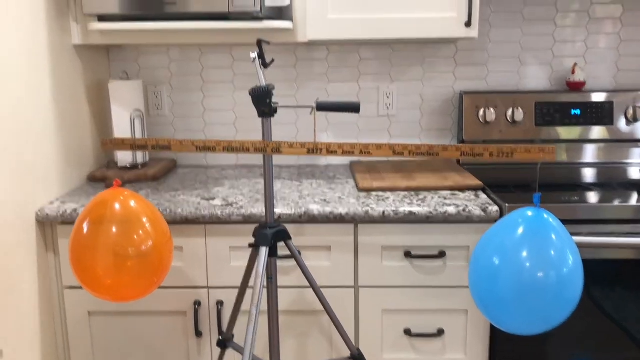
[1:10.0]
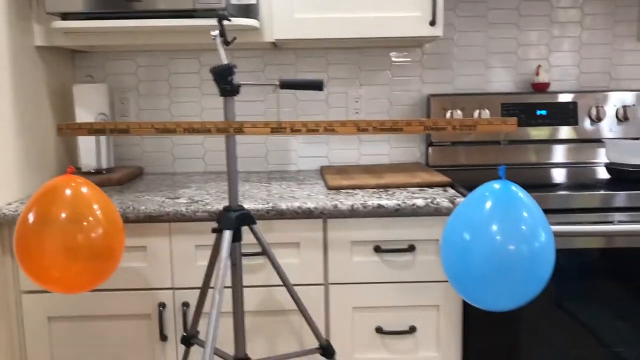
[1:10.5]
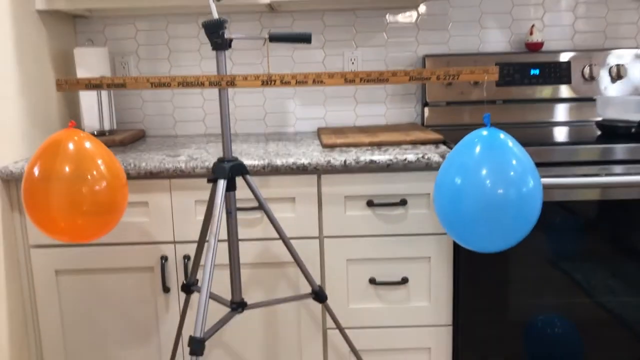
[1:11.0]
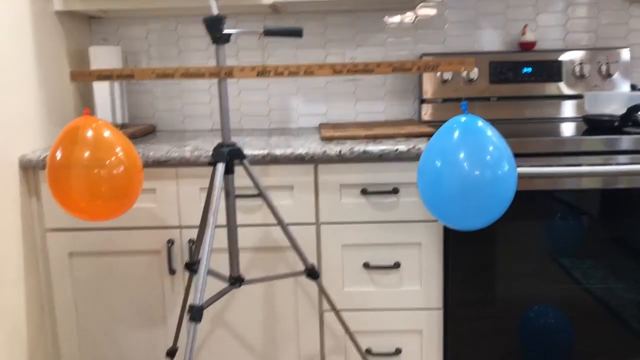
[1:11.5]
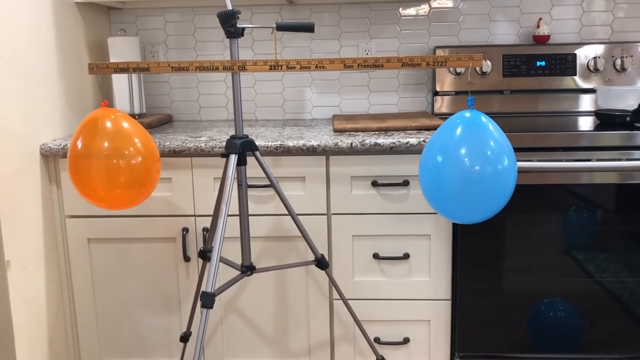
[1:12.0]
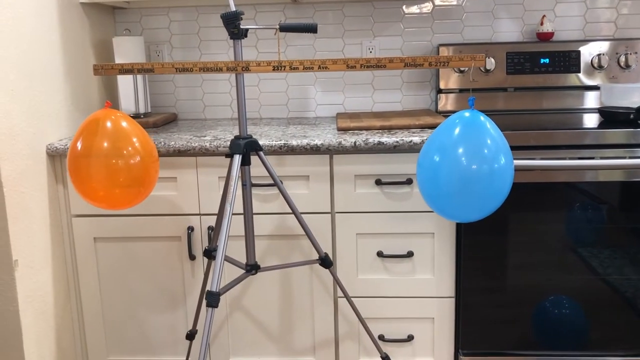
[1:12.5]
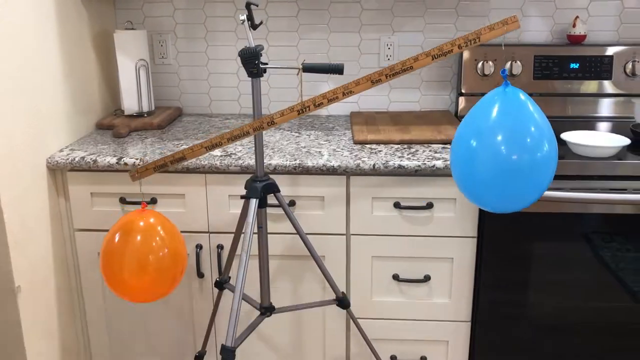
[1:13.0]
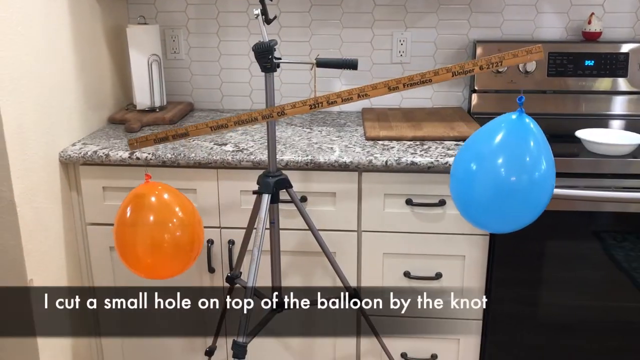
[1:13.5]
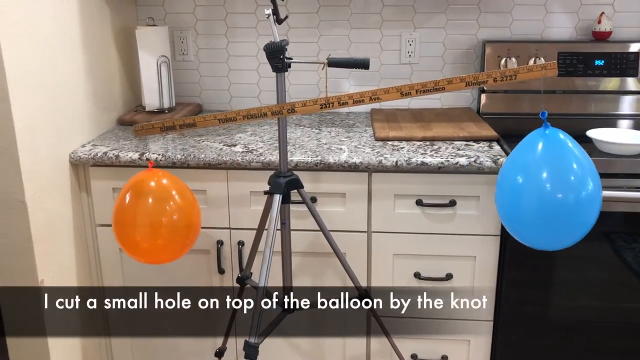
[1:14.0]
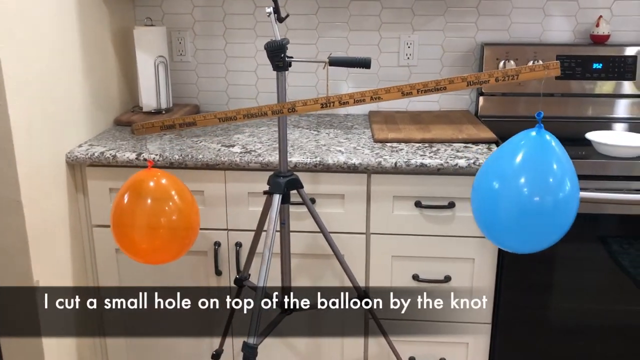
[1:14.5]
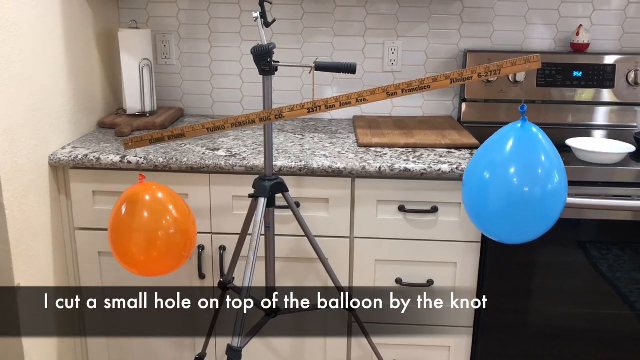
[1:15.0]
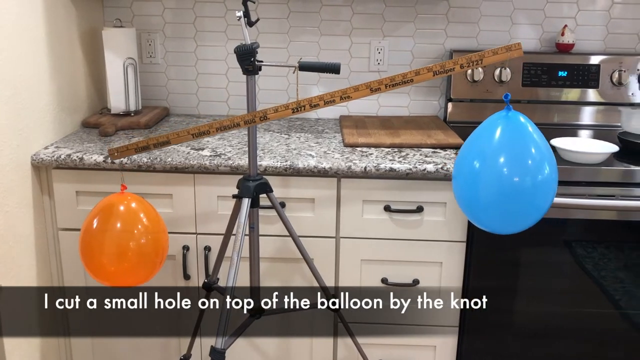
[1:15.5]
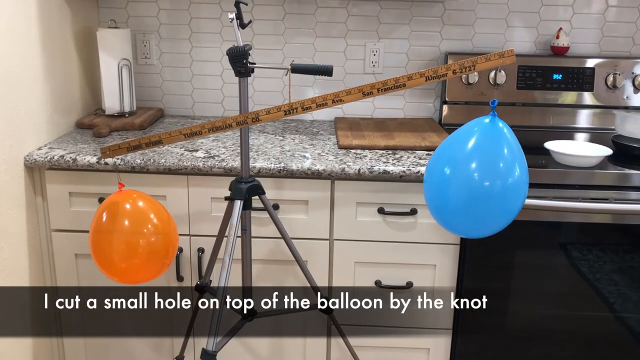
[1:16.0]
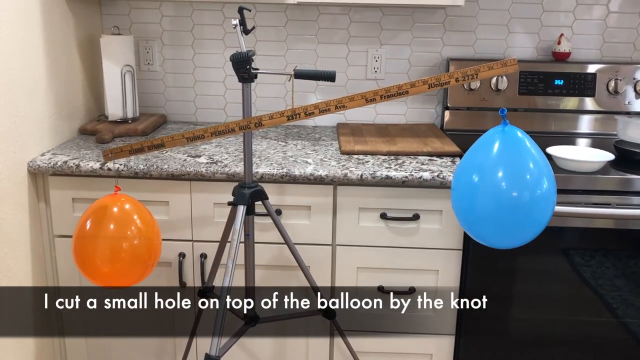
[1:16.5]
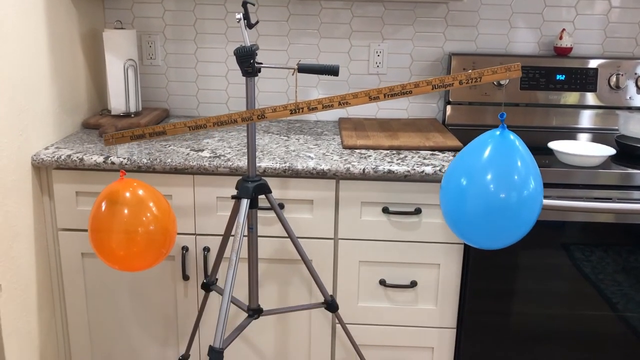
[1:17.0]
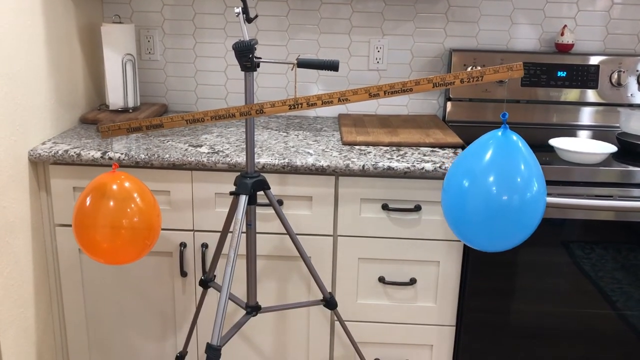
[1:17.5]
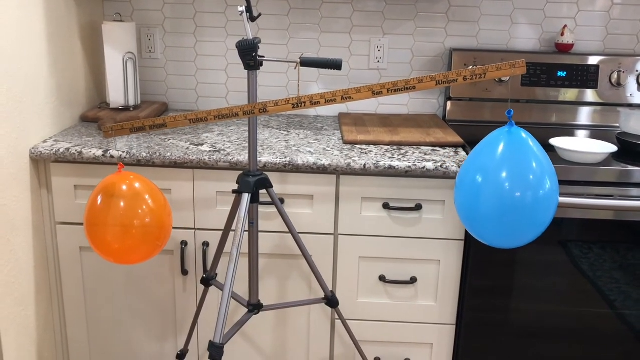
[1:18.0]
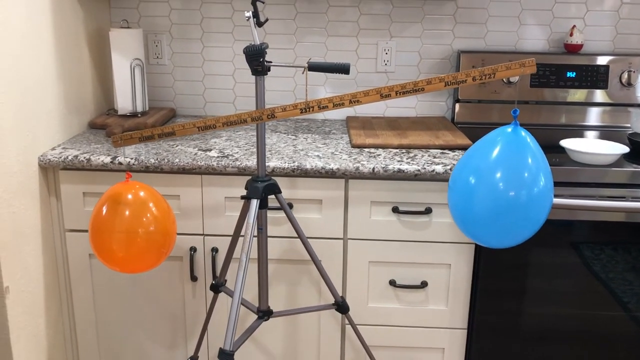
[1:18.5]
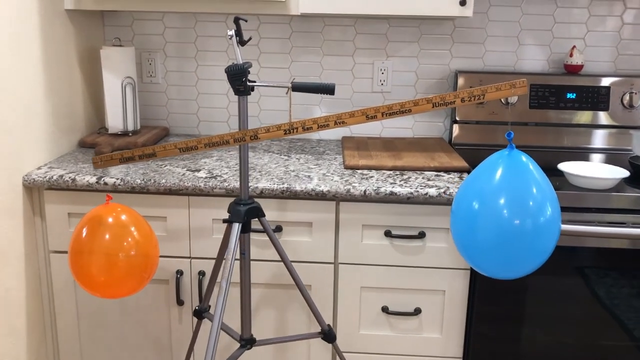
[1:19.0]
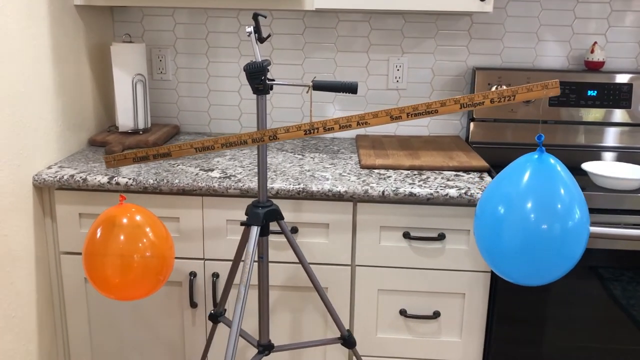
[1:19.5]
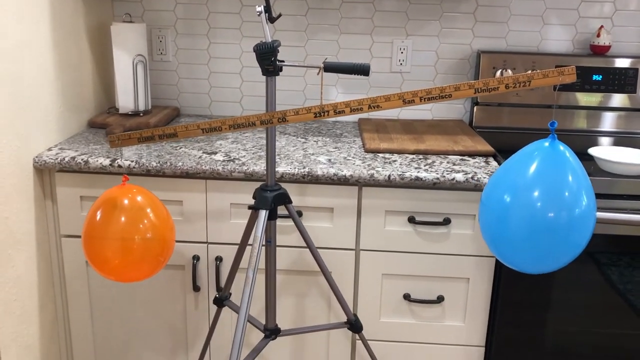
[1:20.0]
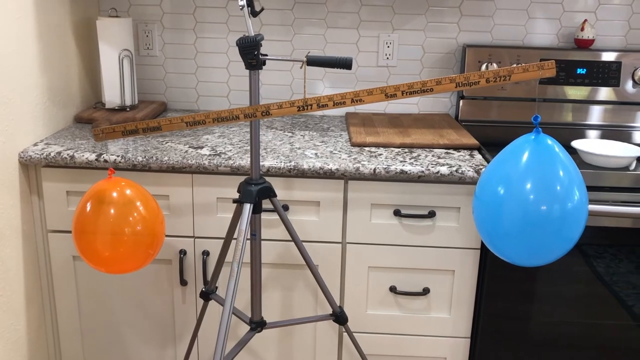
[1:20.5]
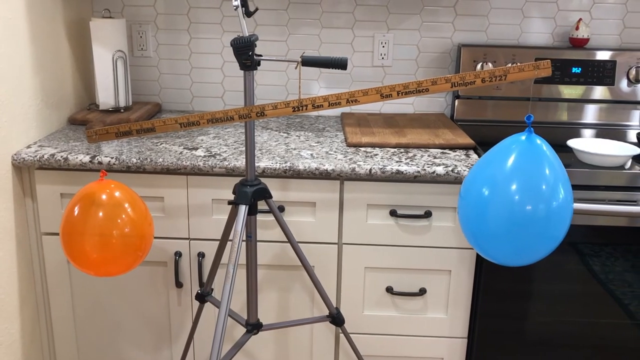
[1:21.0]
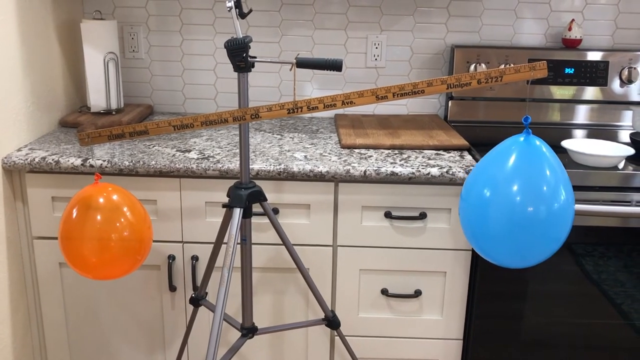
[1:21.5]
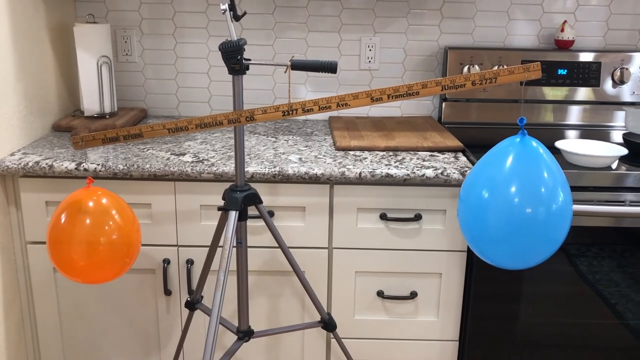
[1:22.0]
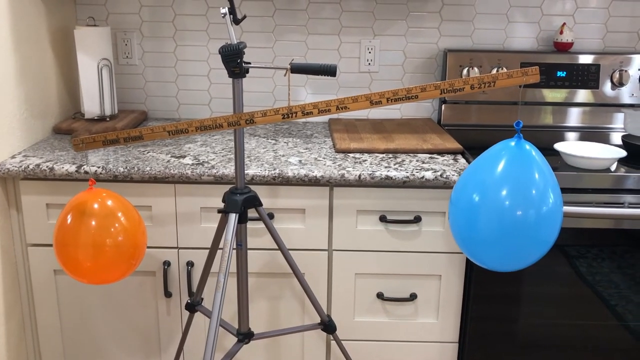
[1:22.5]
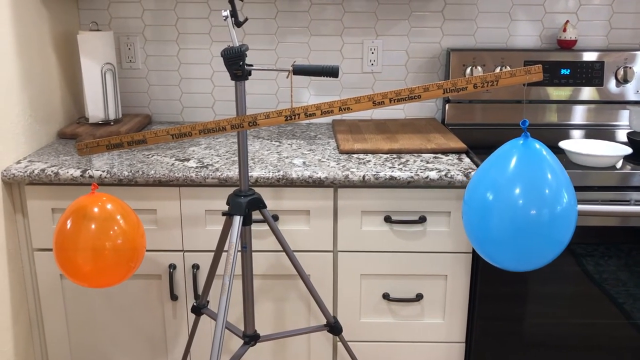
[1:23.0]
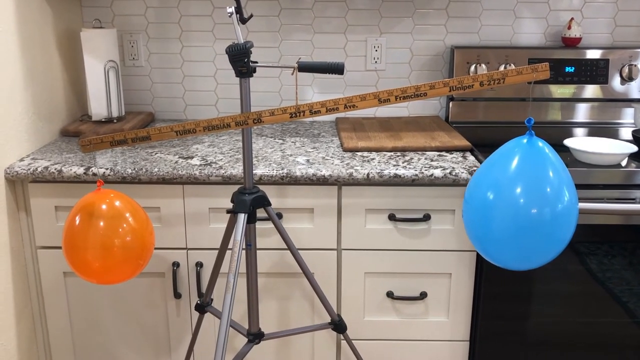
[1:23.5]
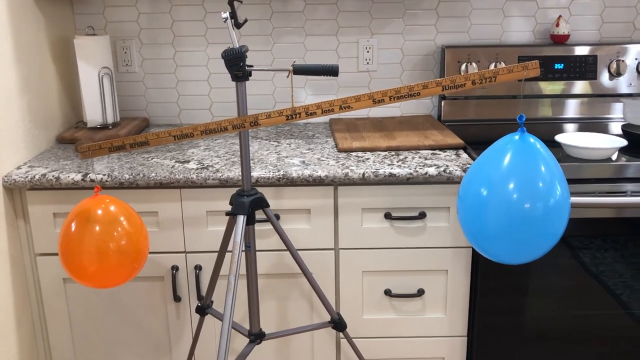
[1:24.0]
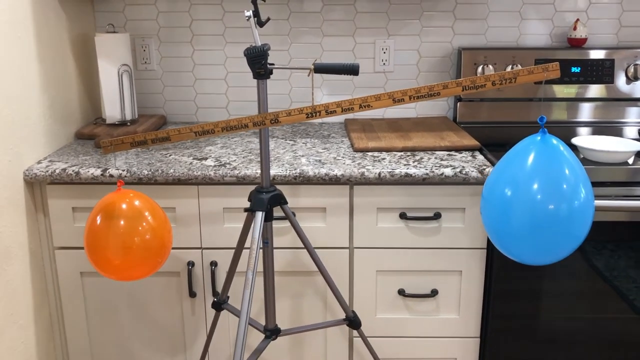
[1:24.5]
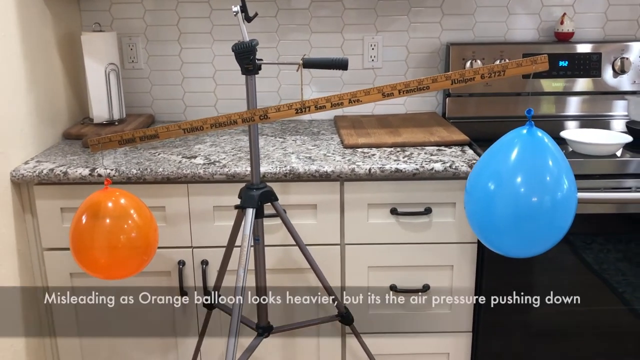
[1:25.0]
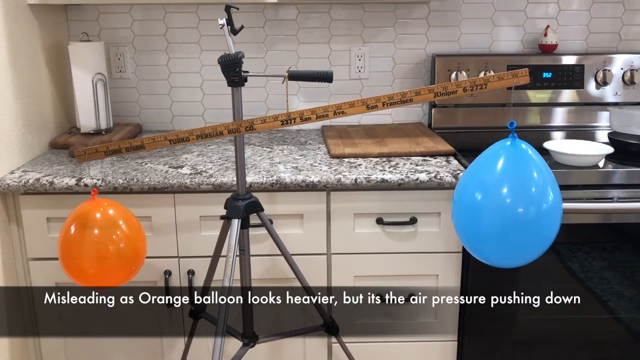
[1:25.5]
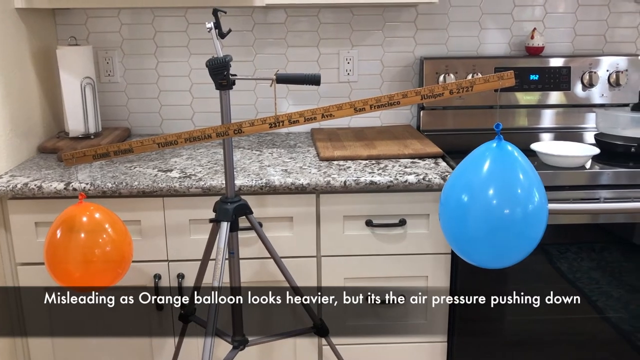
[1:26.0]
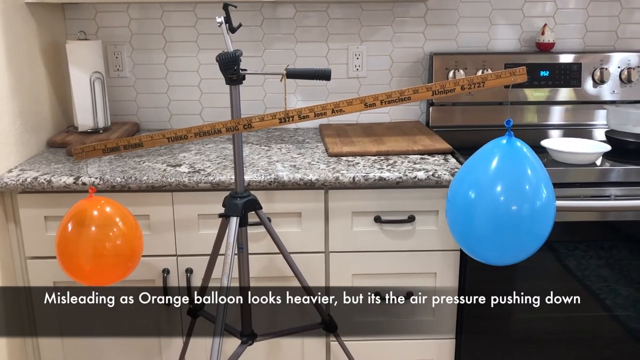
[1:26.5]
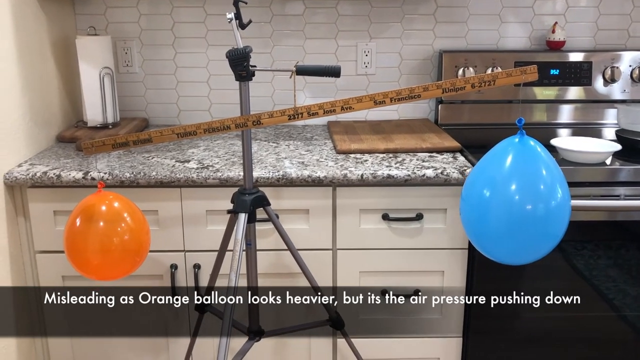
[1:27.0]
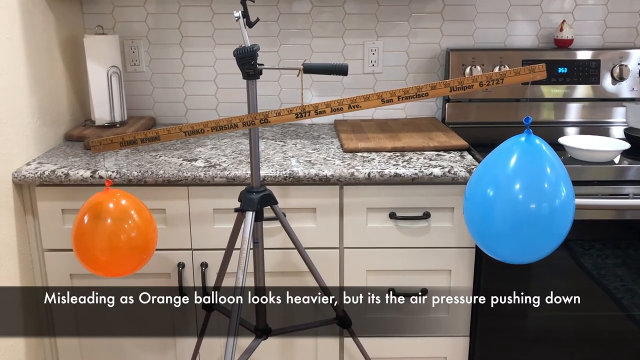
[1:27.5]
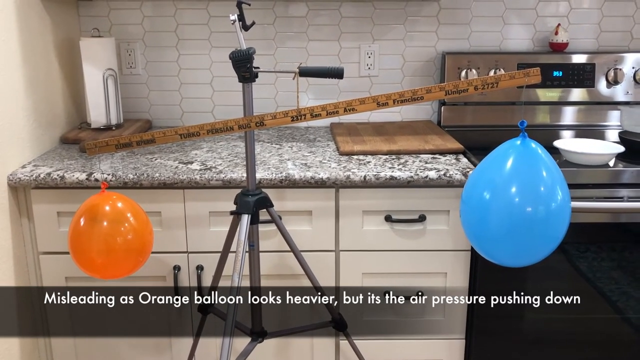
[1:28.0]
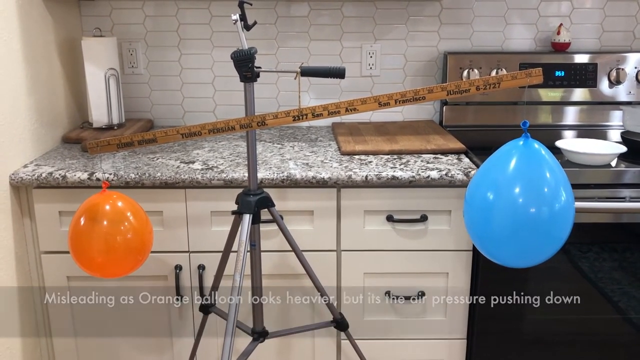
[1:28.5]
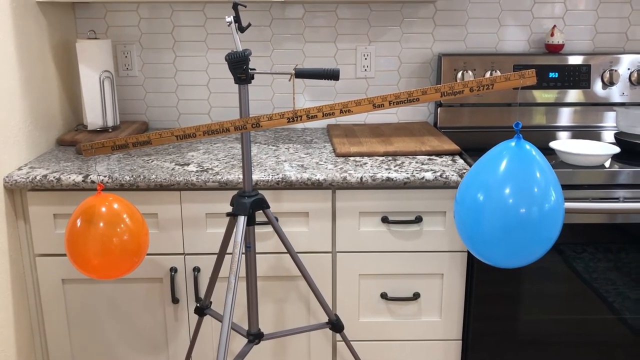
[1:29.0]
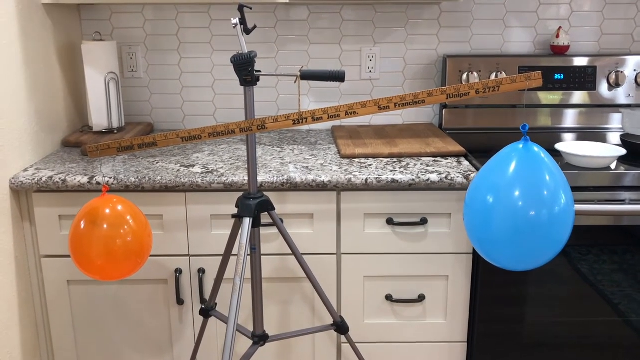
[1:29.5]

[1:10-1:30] A wide shot shows a little of the microwave hanging on the left side, another white door to the right of it, extending over to the edge of the stove. The tripod is just left of center, with three steel legs coming out: one to the right, one to the left and one down toward the camera. In the center, a black piece holds these together, with a silver bar going up almost to the bottom of the microwave and another black box with a handle going out to the right. The right side of the ruler looks a little lower, and it moves back and forth; the balloons move back and forth a little, apparently from air blowing. The video cuts to the orange side being lower, while white text across the bottom gives instructions on how to do it. The orange side stays lower, probably at about a 25 degree angle, and the balloons keep swaying a little at a time. The camera also moves back and forth a little, not held very steady. The blue balloon on the right looks about twice as big as the orange one.